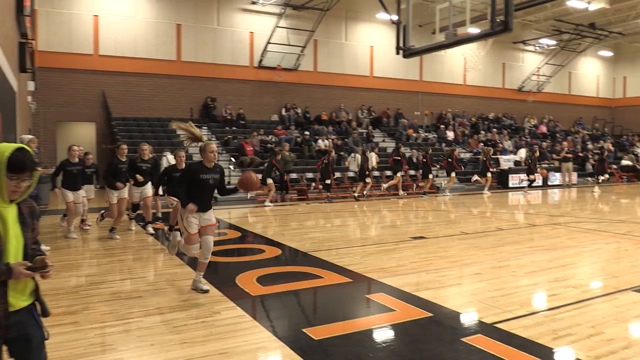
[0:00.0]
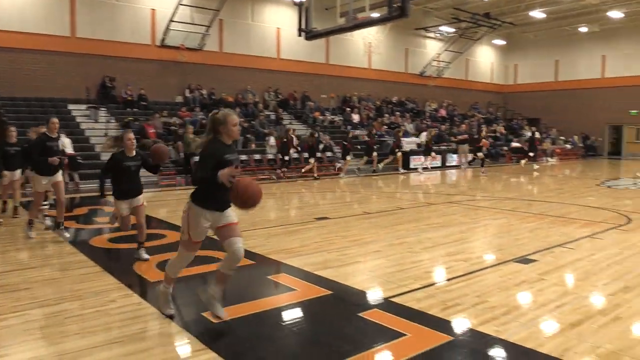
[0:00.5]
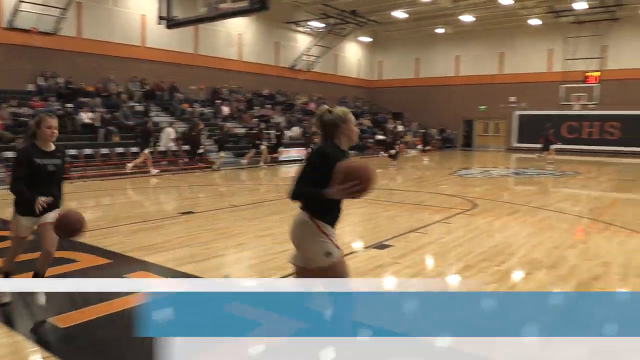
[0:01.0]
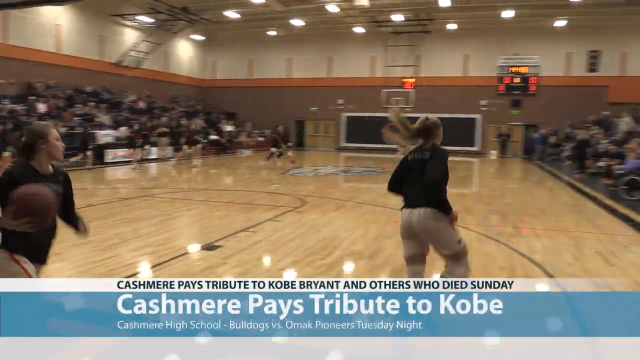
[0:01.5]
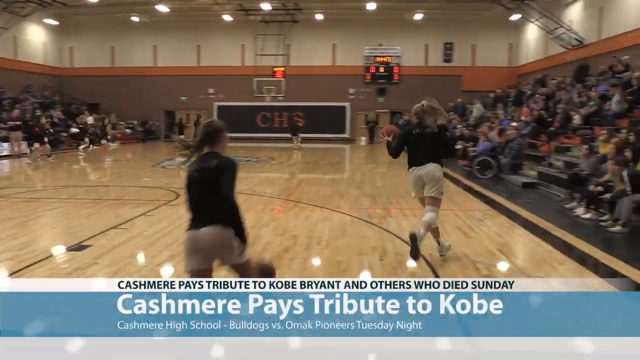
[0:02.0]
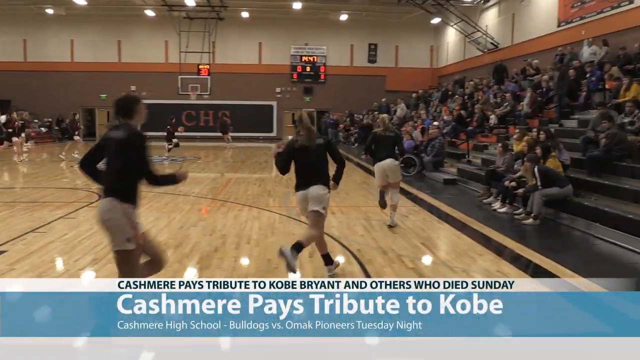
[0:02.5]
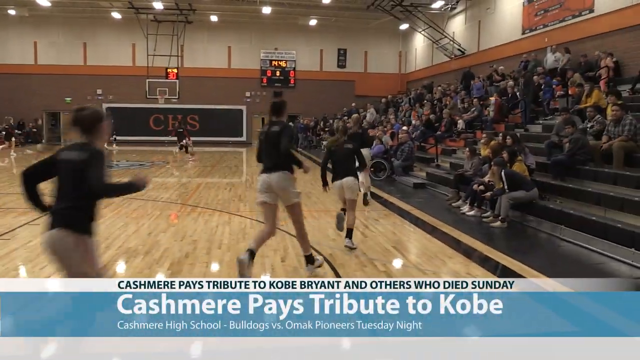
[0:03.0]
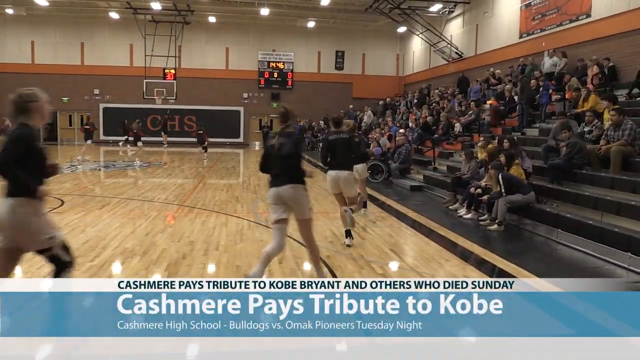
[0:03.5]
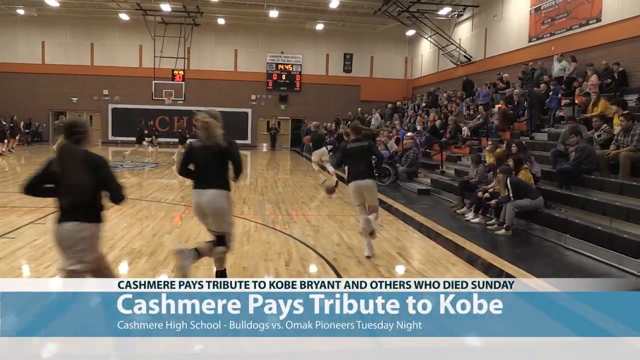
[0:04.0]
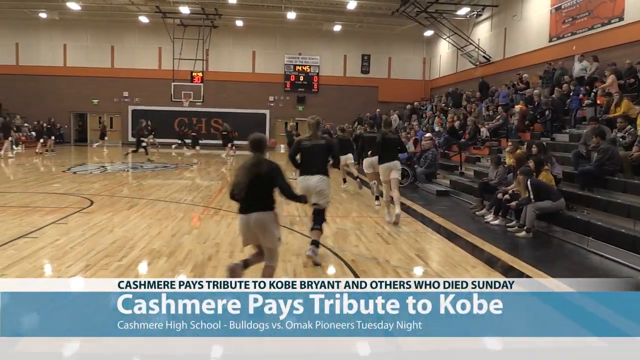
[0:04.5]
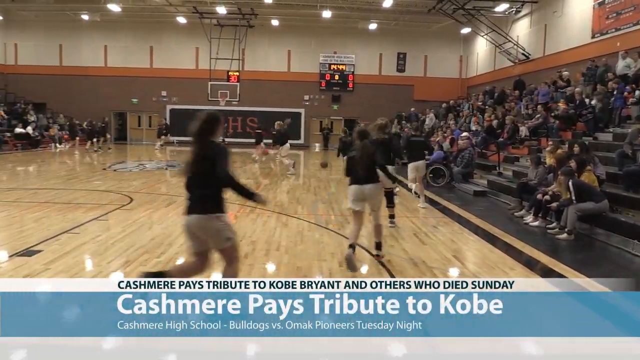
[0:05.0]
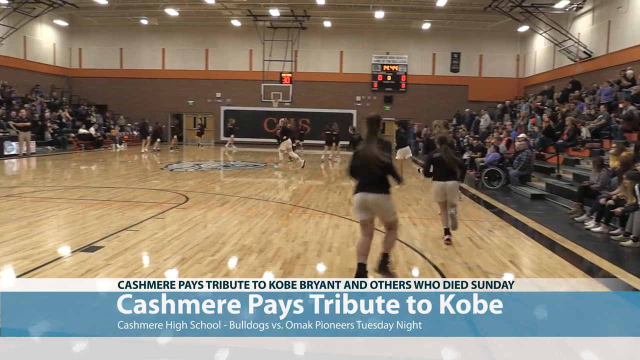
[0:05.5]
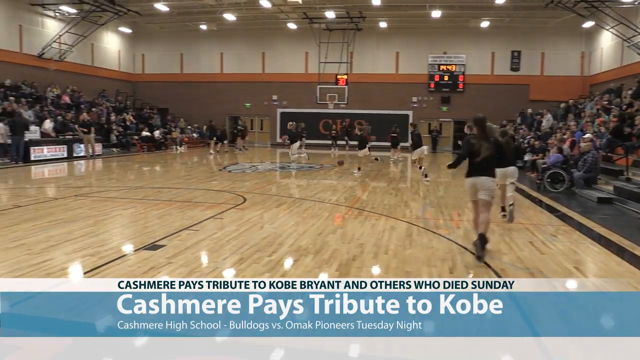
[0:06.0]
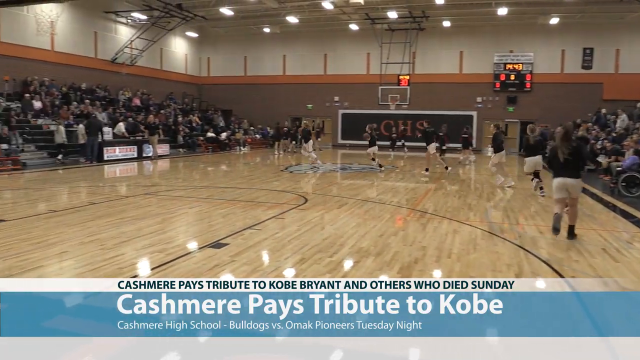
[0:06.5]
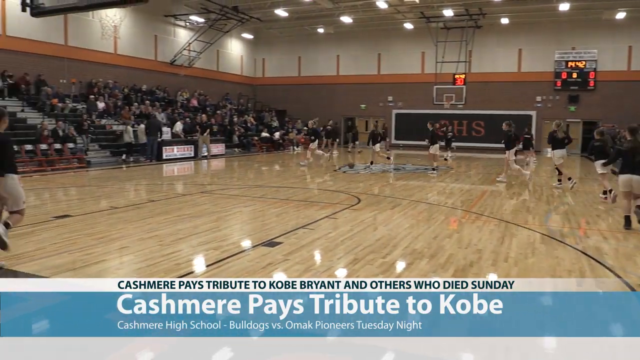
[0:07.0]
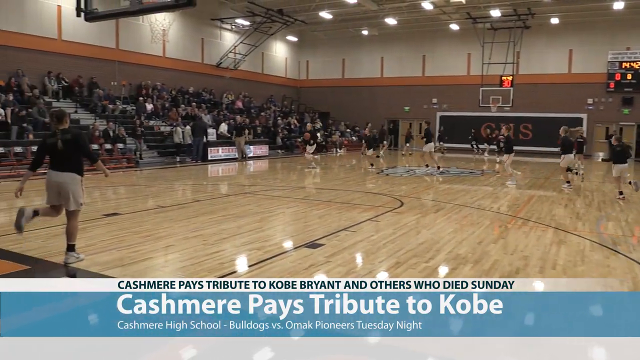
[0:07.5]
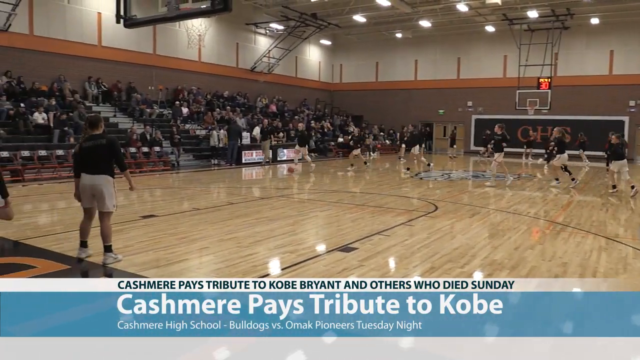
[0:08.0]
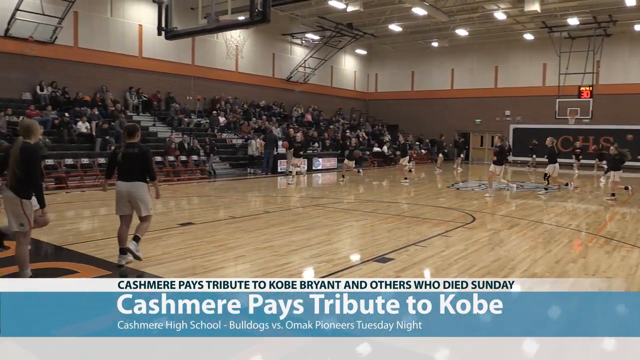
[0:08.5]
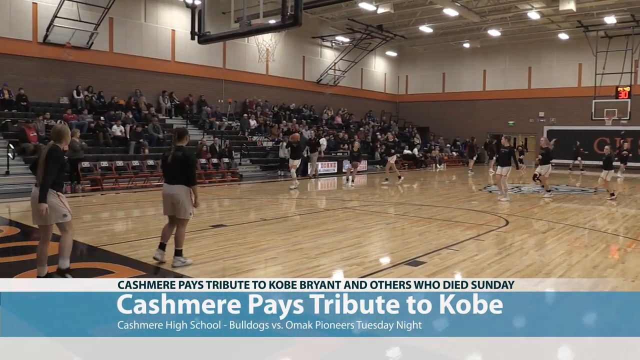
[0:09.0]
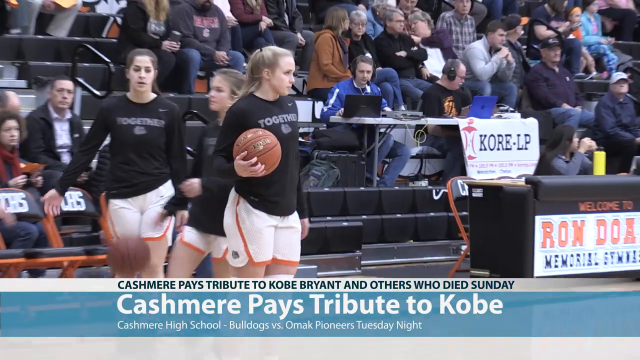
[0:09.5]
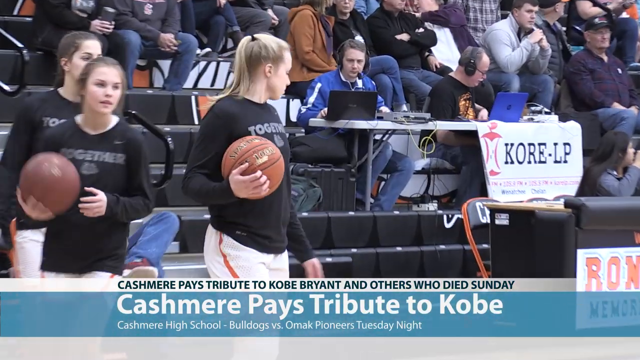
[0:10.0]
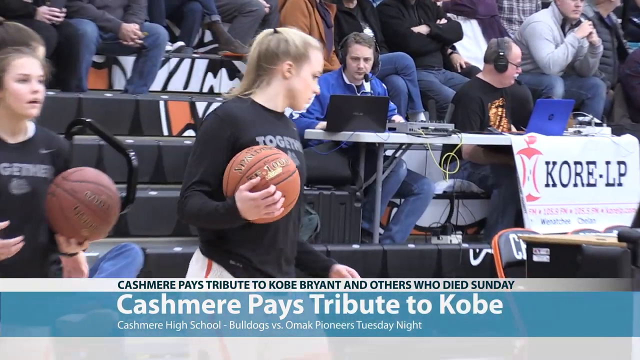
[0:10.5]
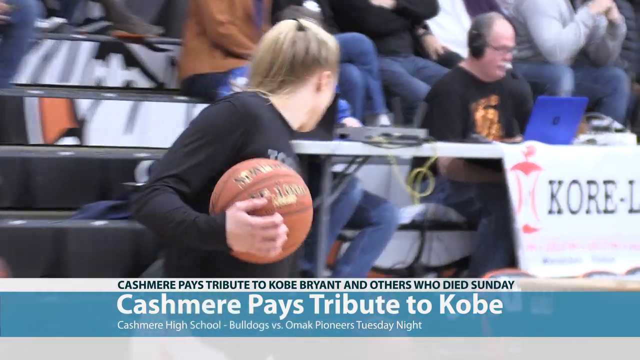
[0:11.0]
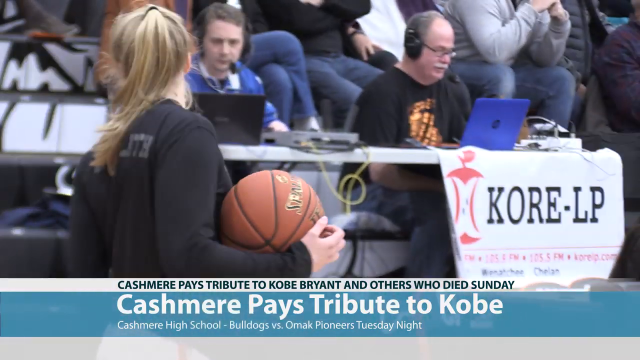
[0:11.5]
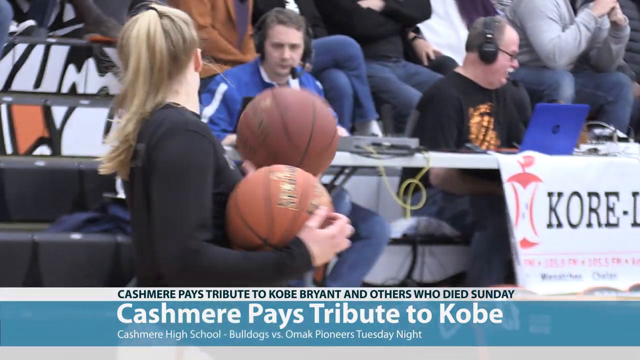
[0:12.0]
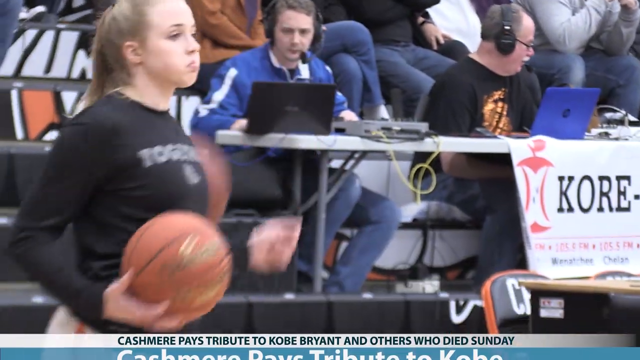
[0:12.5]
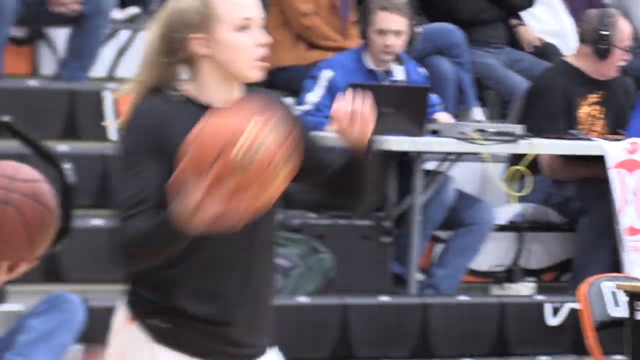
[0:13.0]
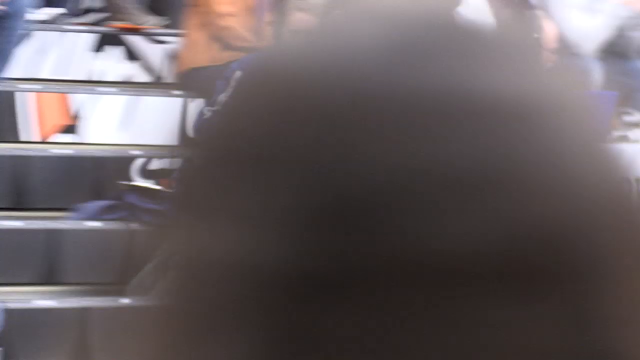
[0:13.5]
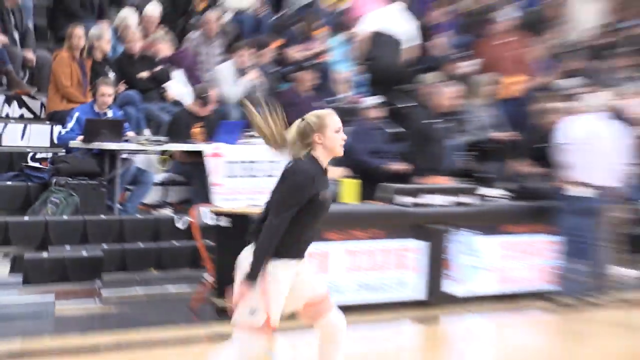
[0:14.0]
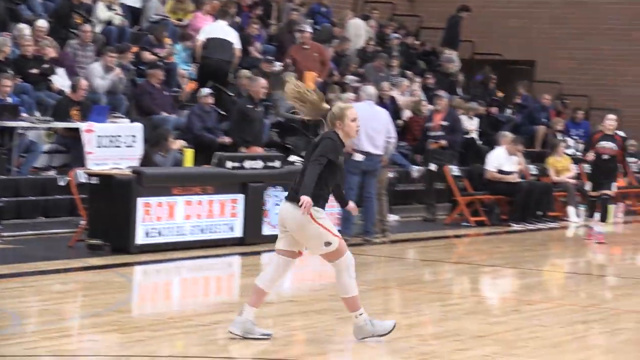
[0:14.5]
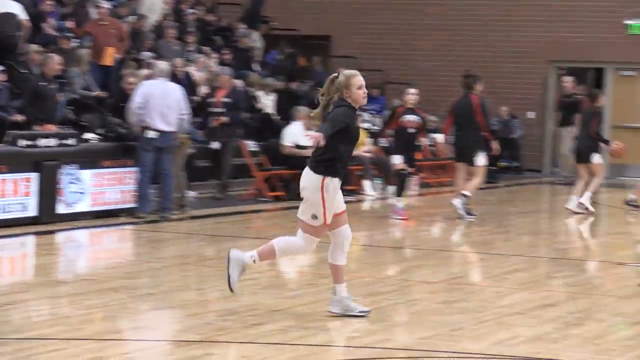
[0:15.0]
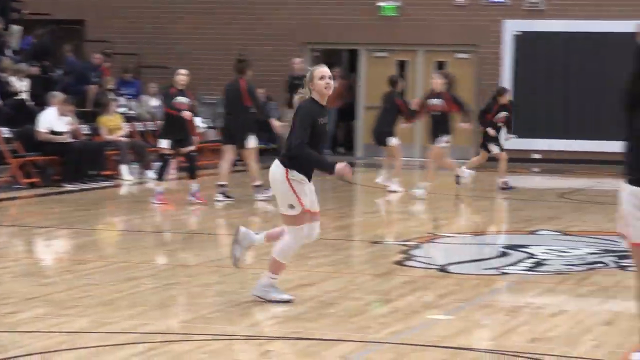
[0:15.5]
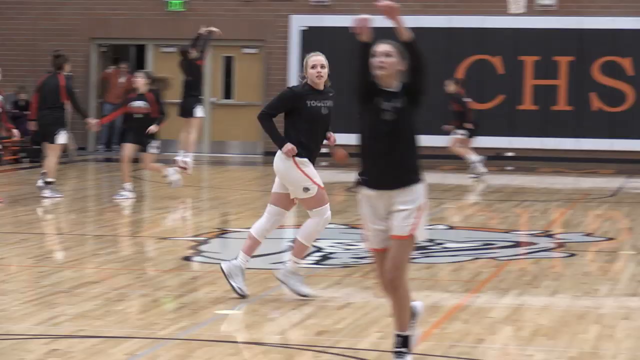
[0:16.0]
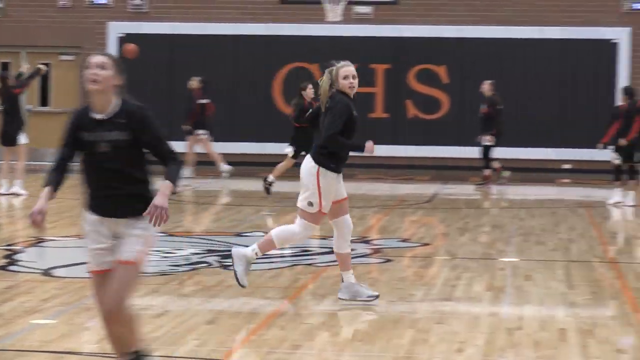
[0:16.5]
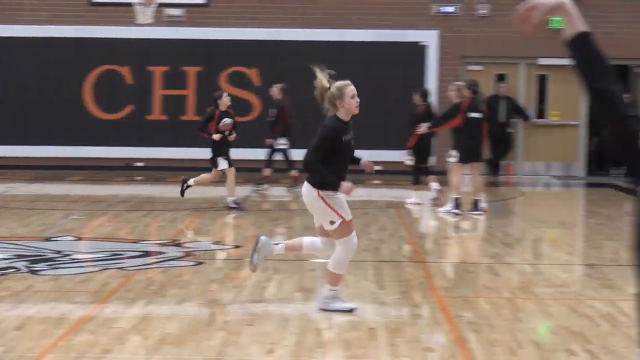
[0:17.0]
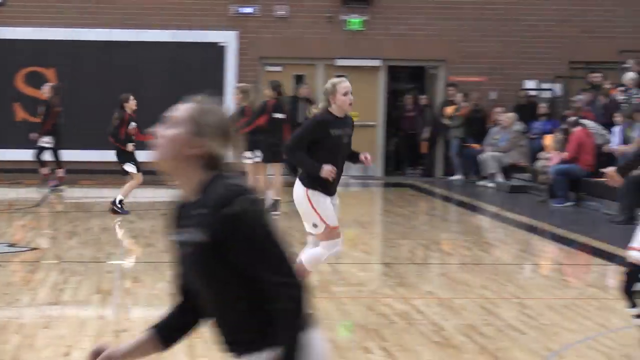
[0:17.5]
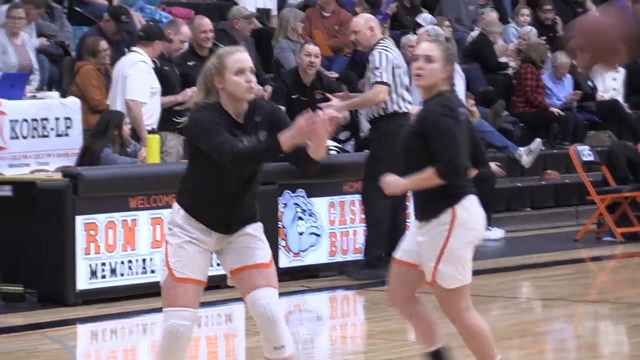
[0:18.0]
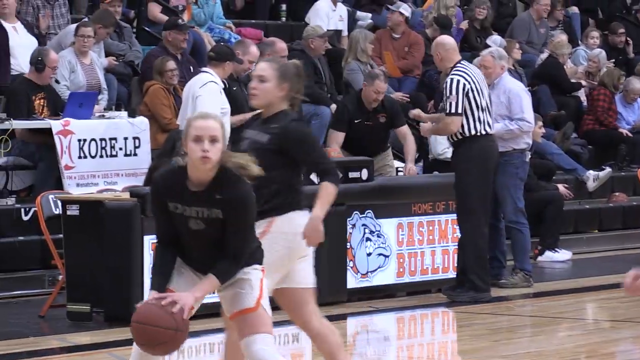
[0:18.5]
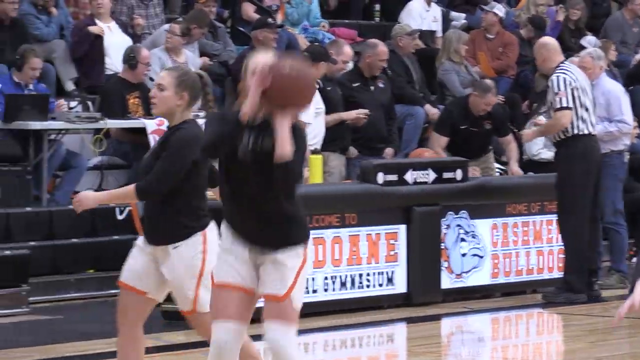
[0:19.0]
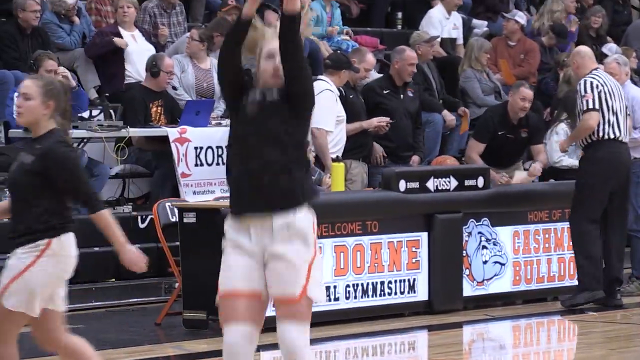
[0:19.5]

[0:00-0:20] The video opens in a basketball gymnasium, with the camera on the baseline. From the left, women's basketball players in black tops and white shorts dribble down the baseline toward the camera. They pass the camera, reach the end of the baseline and turn left, their backs now running away from the camera. They make a left at the half court line, come all the way around and start a layup drill. A different angle focuses on one specific female player, a white woman with blonde hair, holding the basketball in her right hand. She puts the ball over her head and passes it, and the camera follows her run across the court at the half court line. Another angle shows what looks to be the same player catching the ball and putting up a shot, holding her left hand up afterward in a follow-through.